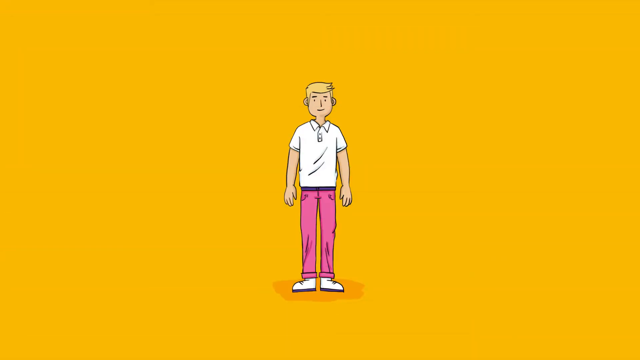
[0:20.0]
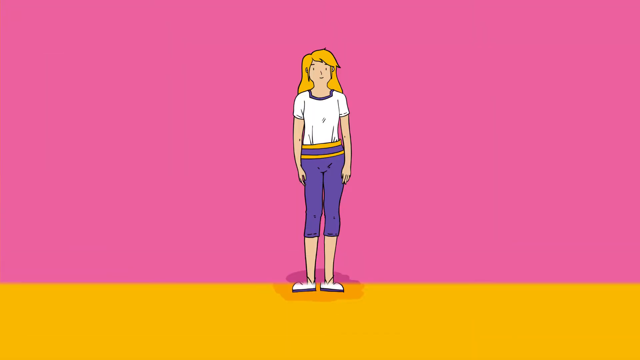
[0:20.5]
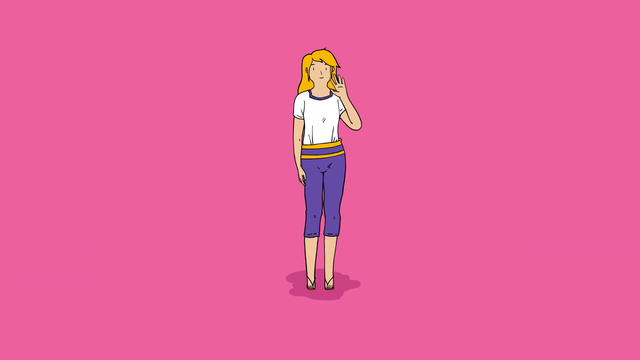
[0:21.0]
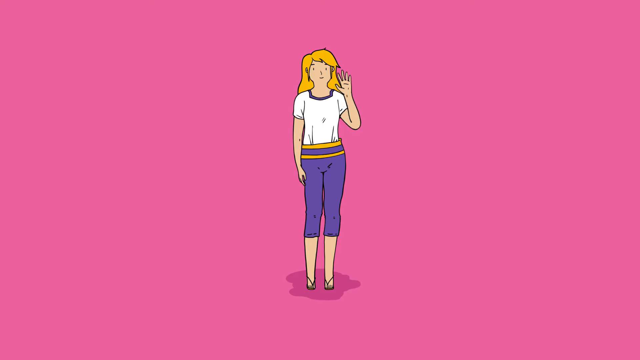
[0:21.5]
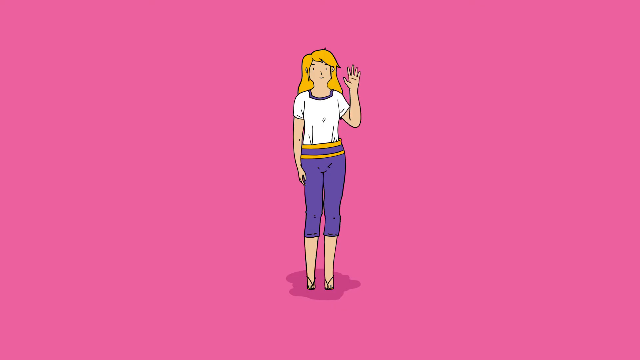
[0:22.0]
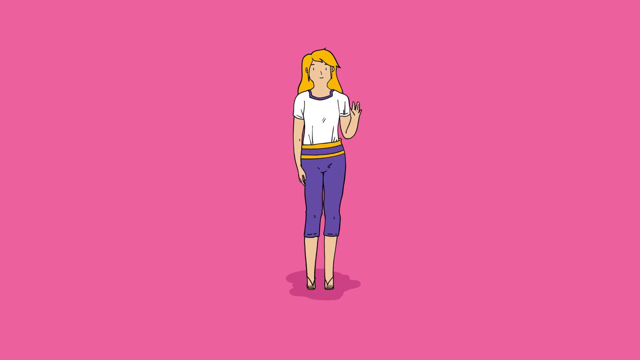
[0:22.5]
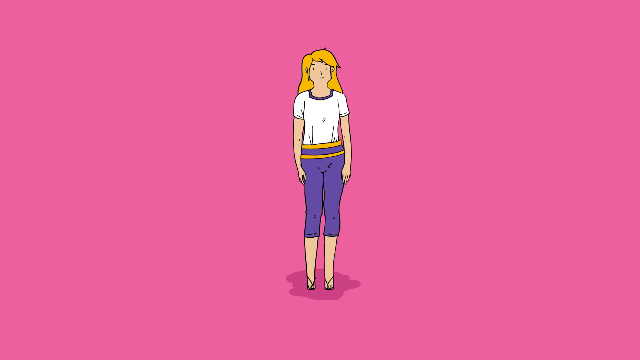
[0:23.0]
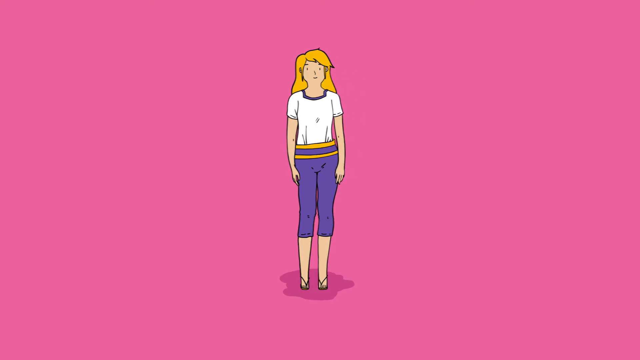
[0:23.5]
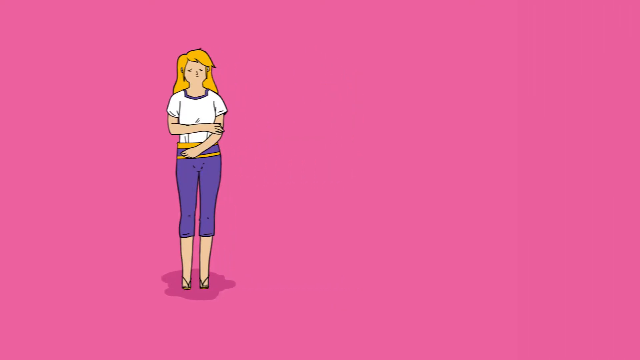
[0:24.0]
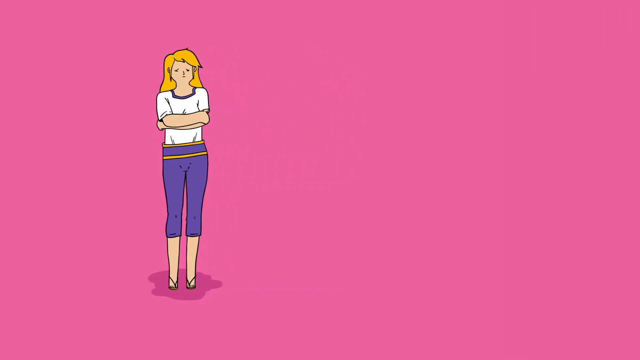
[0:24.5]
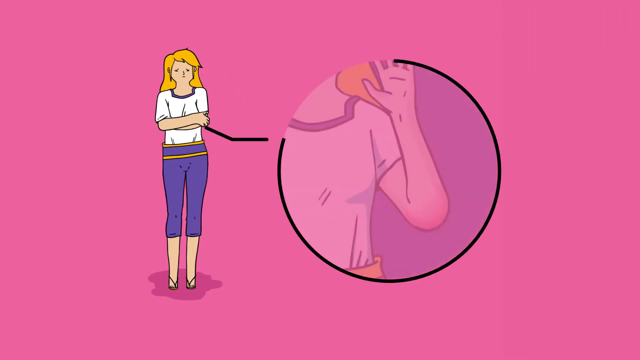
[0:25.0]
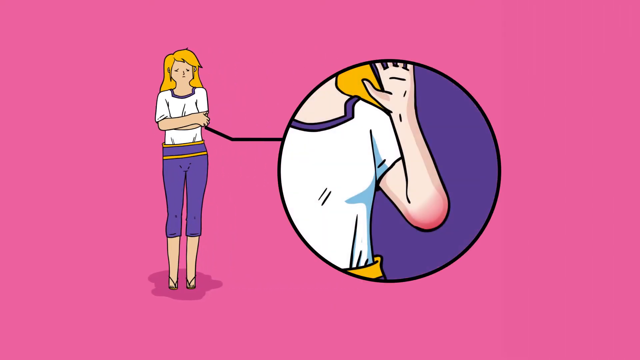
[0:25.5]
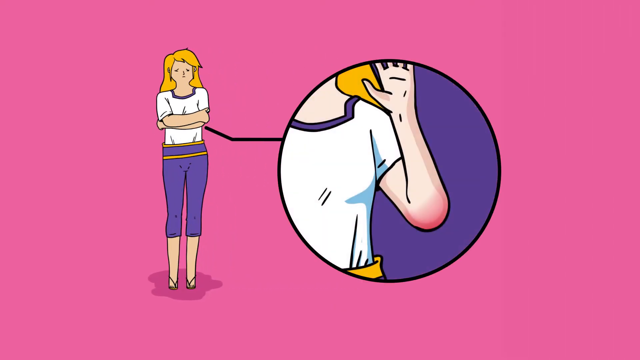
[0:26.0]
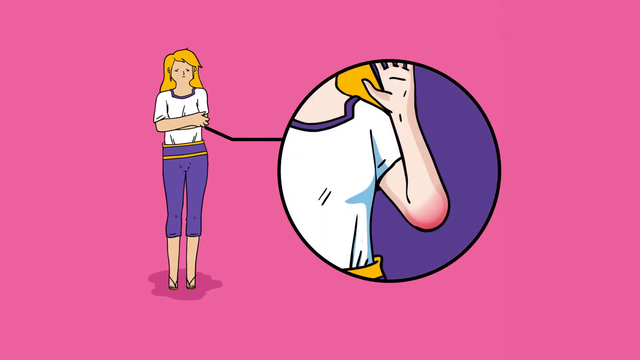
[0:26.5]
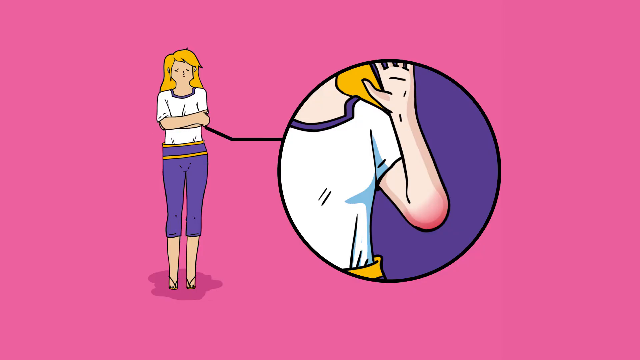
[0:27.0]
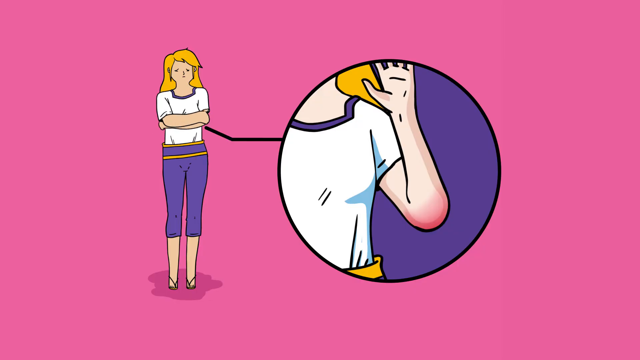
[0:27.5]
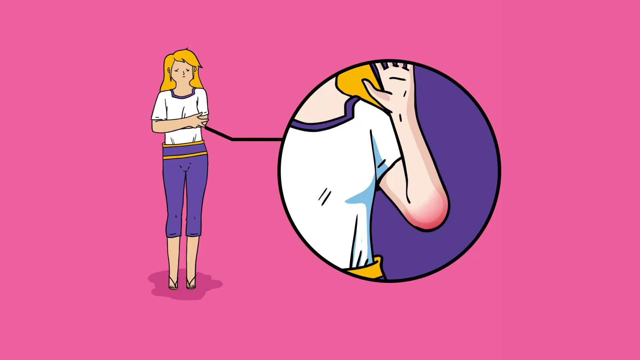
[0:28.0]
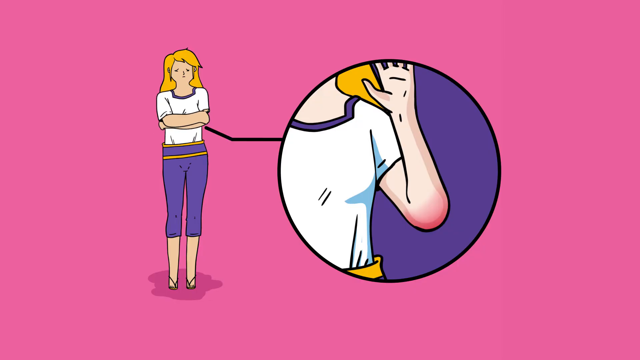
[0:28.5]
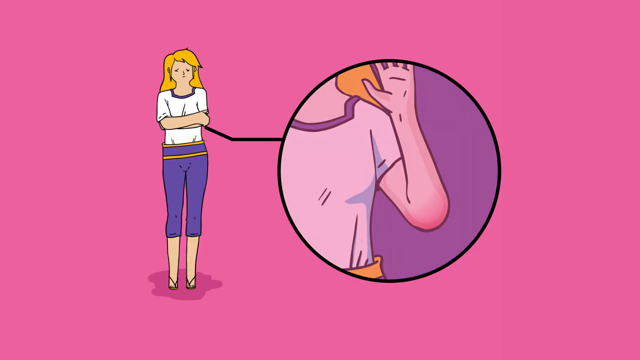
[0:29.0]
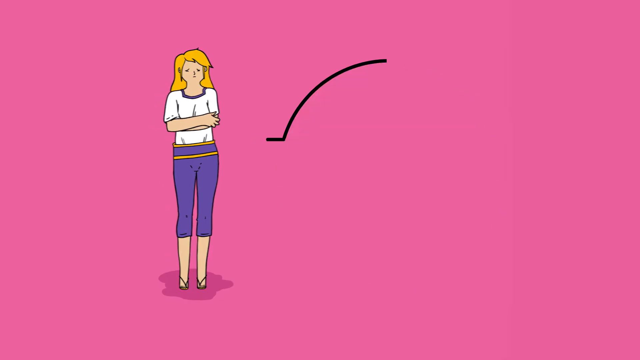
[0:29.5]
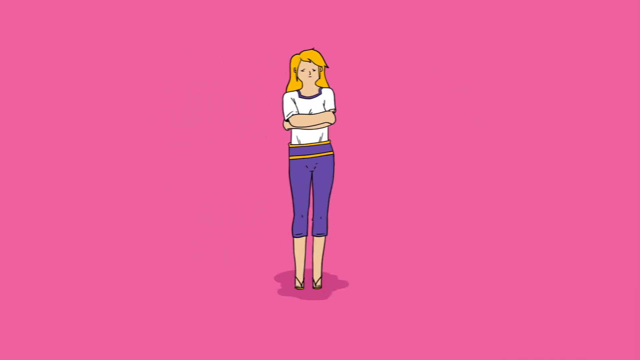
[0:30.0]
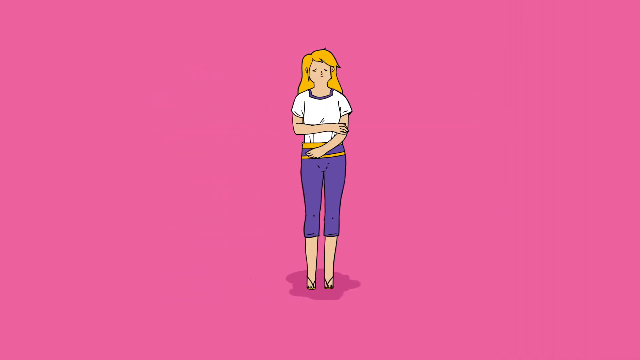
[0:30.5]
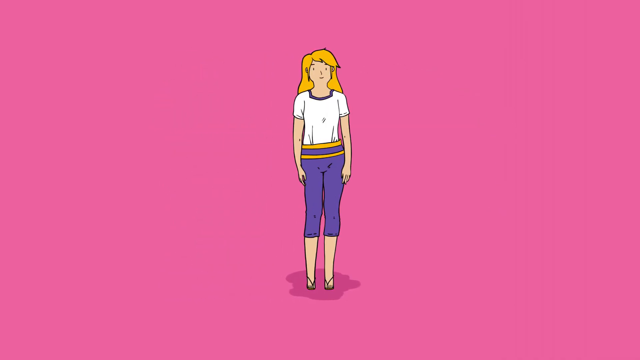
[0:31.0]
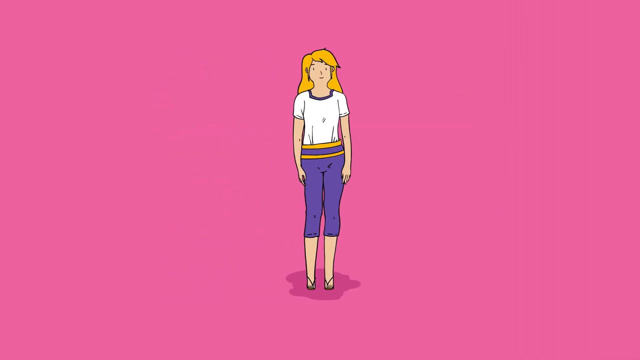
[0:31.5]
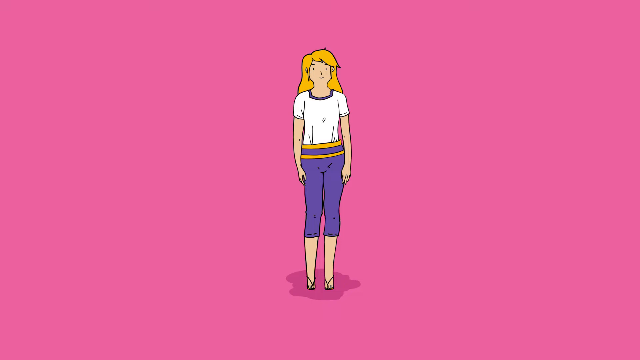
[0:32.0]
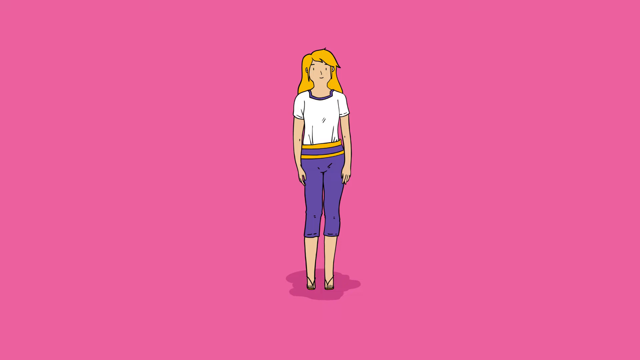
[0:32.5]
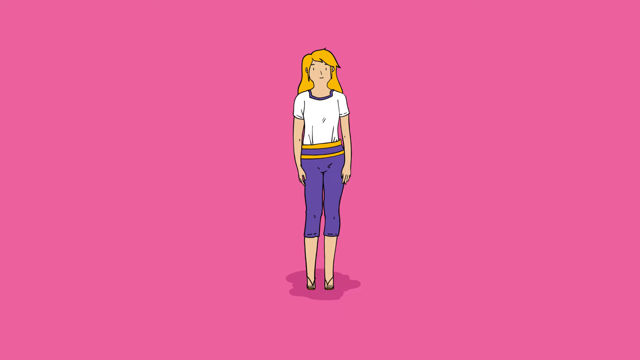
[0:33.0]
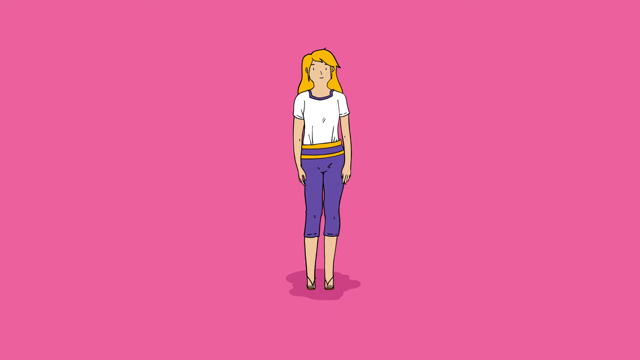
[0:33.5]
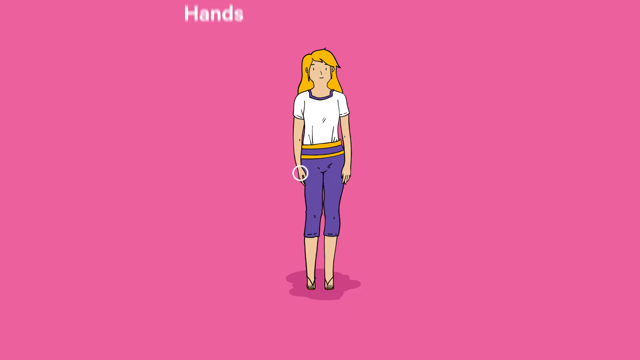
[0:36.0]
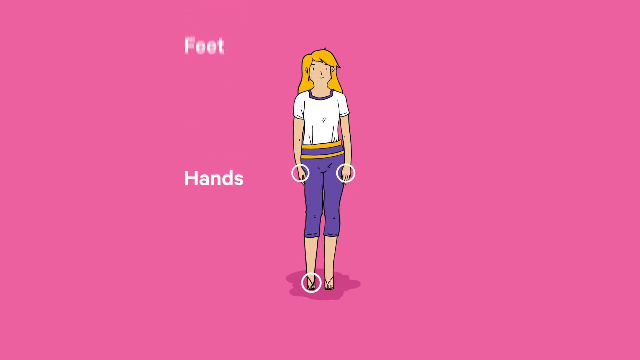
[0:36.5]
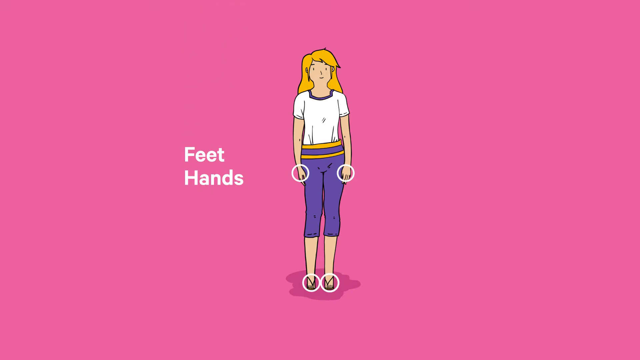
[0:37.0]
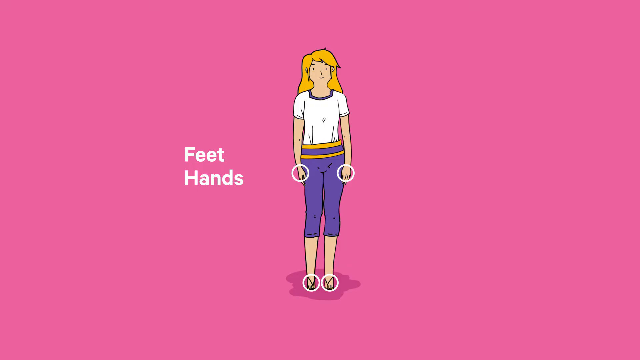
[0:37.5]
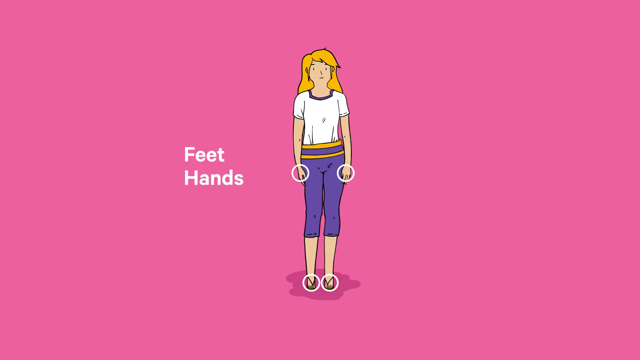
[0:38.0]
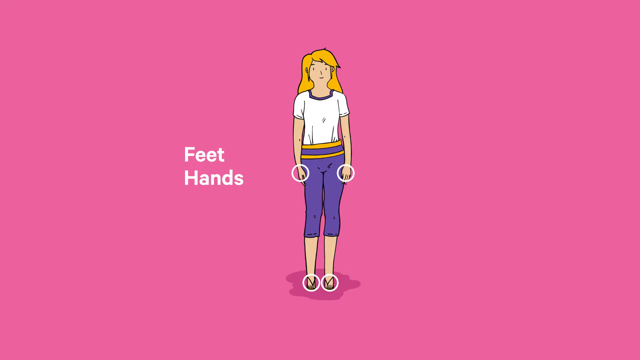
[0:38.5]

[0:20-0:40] The cartoon animation continues with a guy who has blonde hair, a white shirt, pink pants and white shoes, and a girl with blonde hair, a white shirt and blue-purple pants who is waving. The girl then has her arms crossed, and the view focuses on what is possibly her elbow as she rubs it. The background is pink. The animation shows where these problems can occur, showing hands and feet. The guy is shown against a yellow background, wearing a white shirt and pinkish pants. Most of this part focuses on the girl and her elbow, along with the hands and feet.